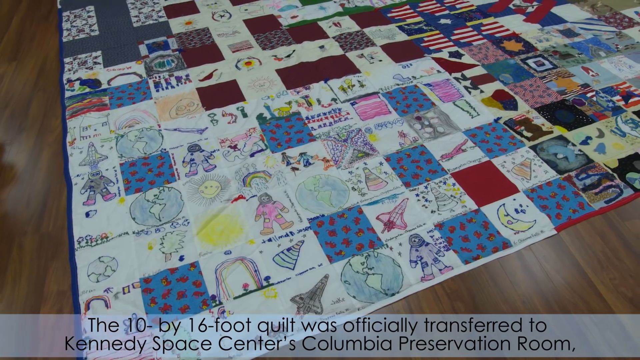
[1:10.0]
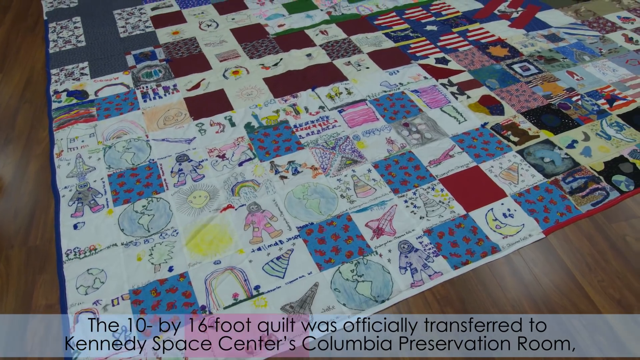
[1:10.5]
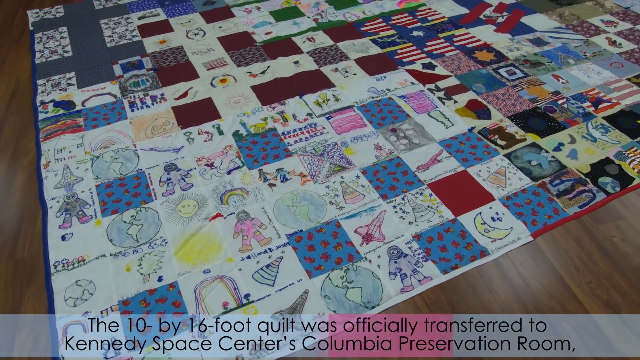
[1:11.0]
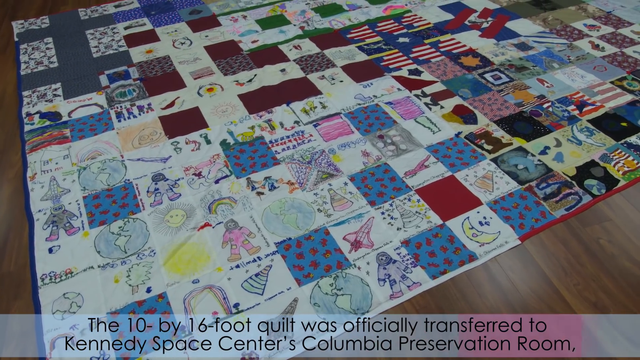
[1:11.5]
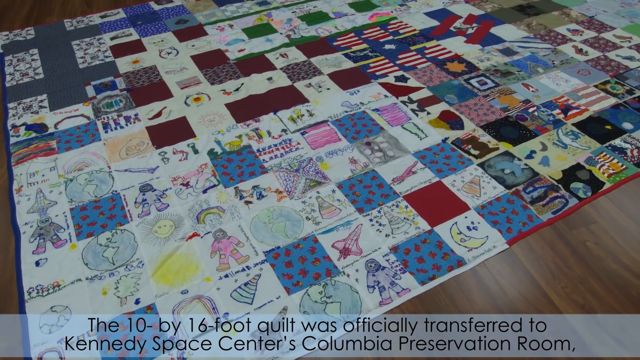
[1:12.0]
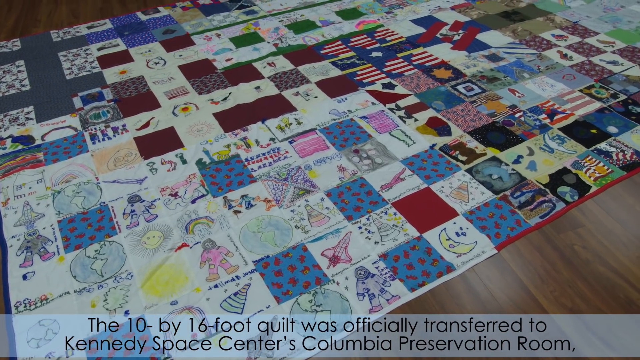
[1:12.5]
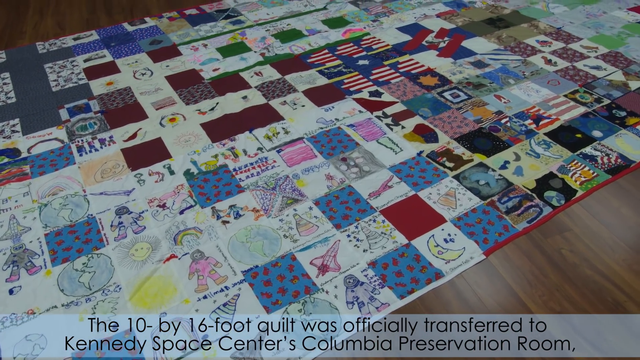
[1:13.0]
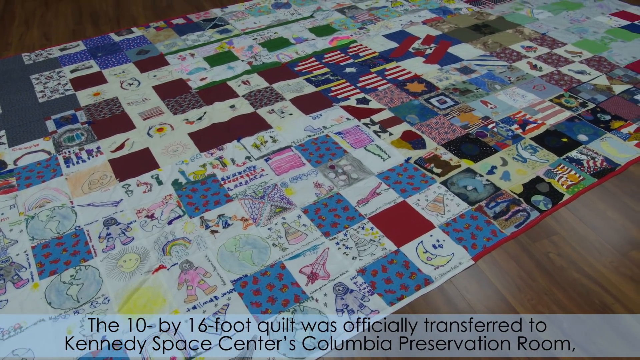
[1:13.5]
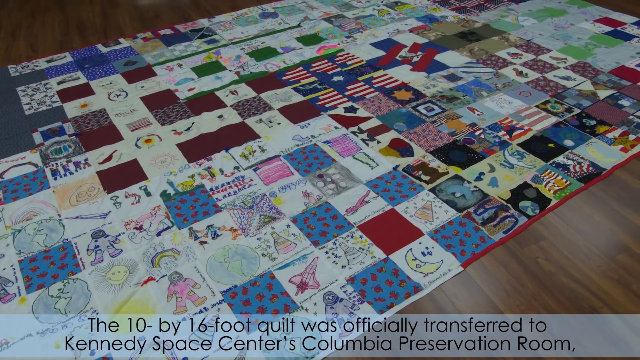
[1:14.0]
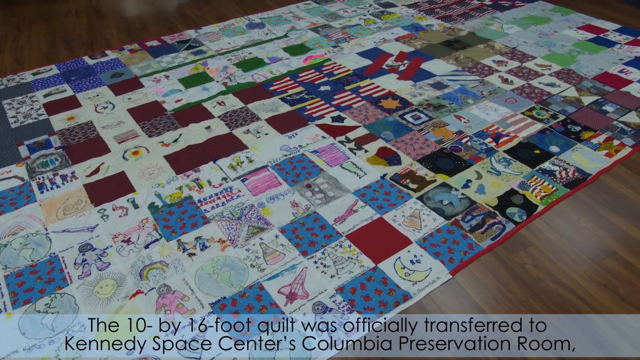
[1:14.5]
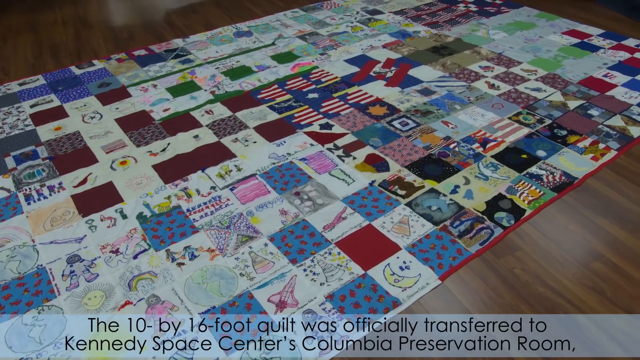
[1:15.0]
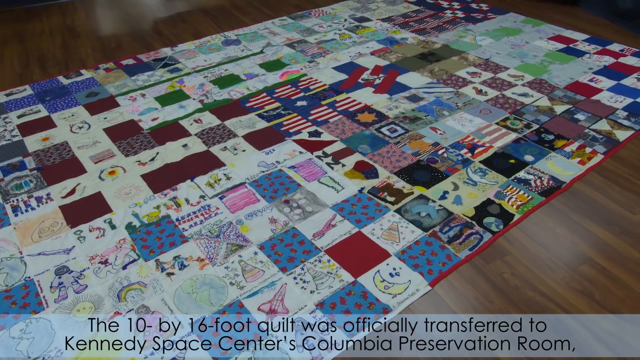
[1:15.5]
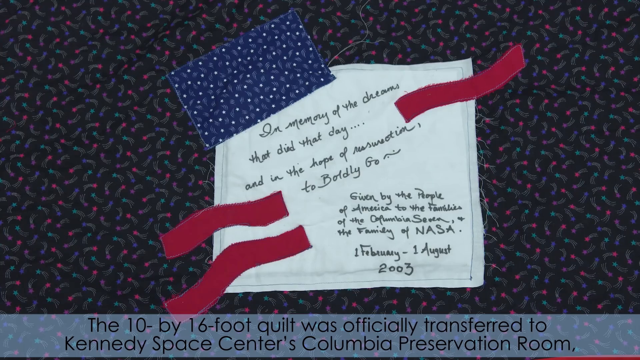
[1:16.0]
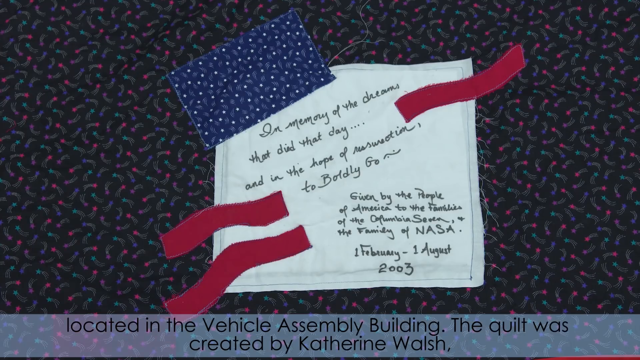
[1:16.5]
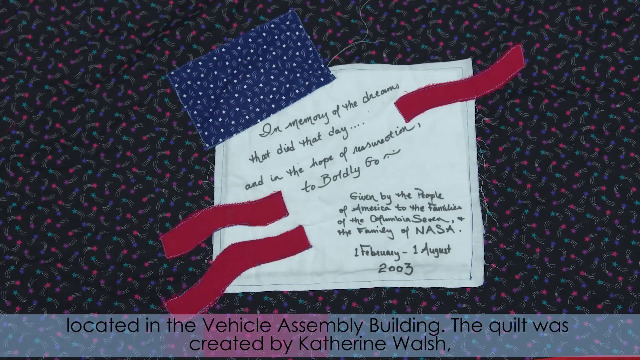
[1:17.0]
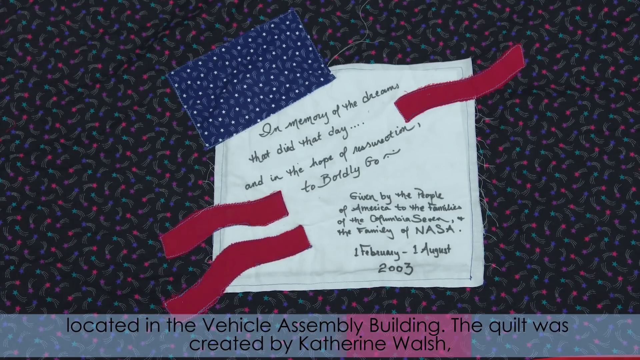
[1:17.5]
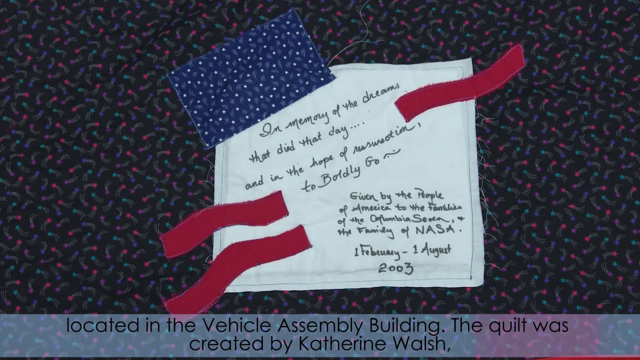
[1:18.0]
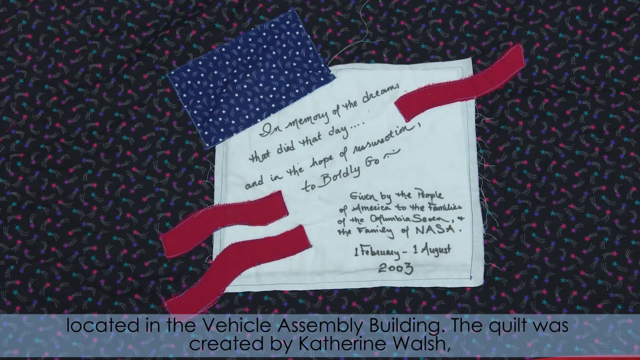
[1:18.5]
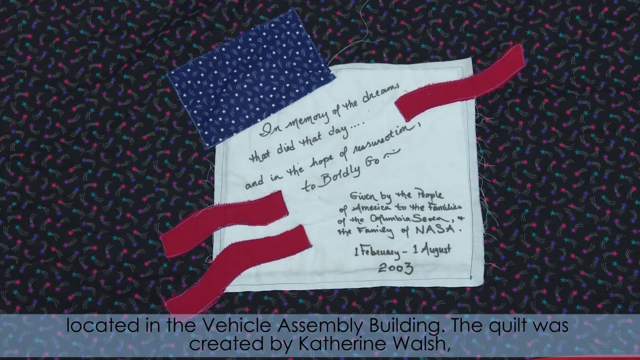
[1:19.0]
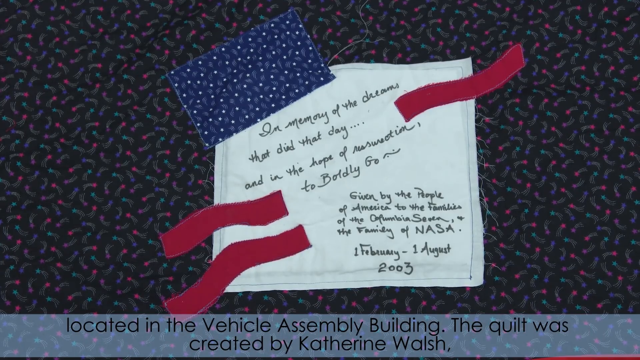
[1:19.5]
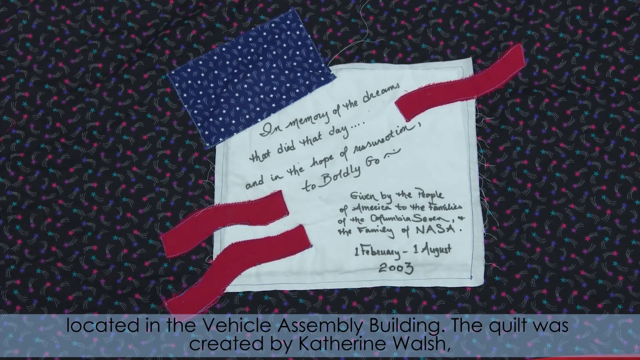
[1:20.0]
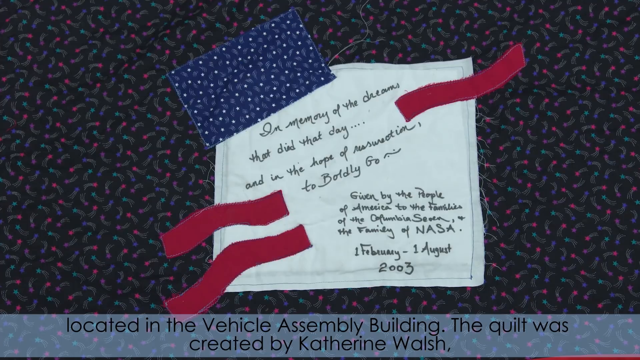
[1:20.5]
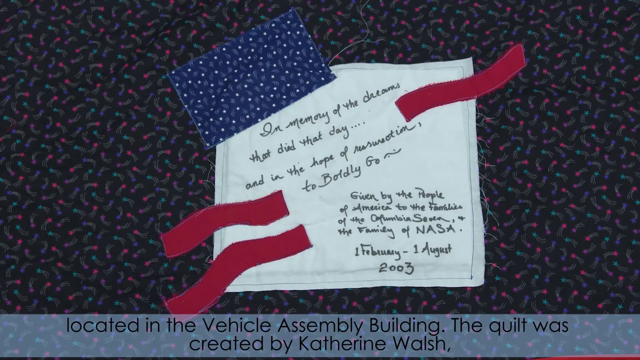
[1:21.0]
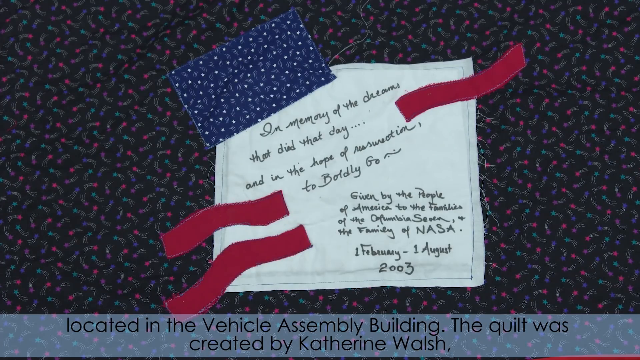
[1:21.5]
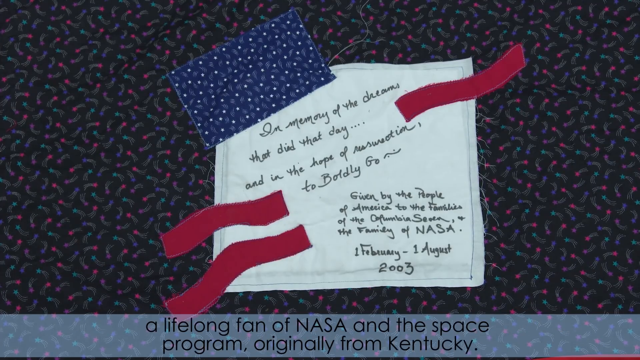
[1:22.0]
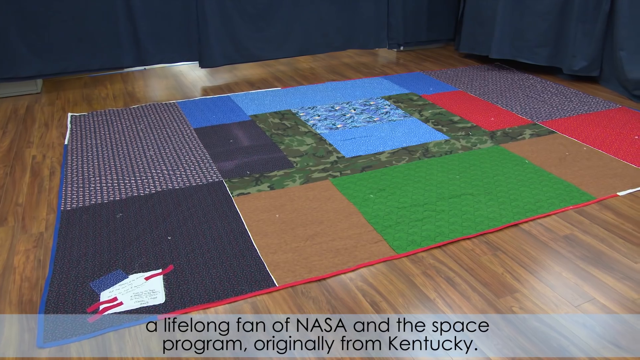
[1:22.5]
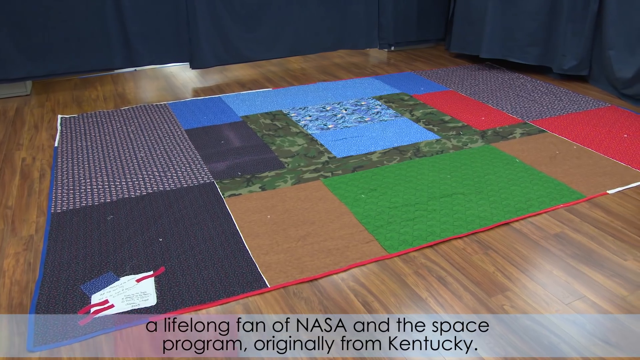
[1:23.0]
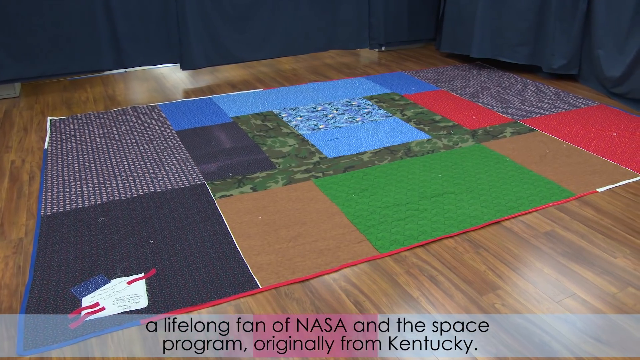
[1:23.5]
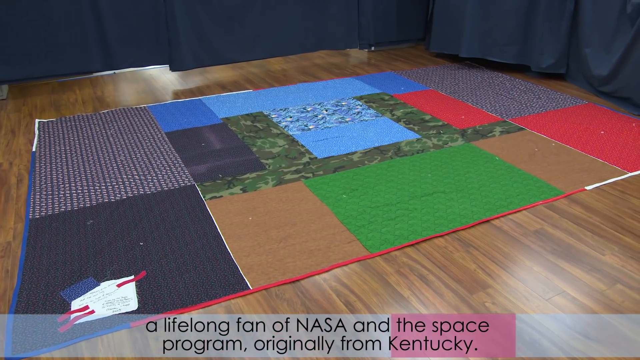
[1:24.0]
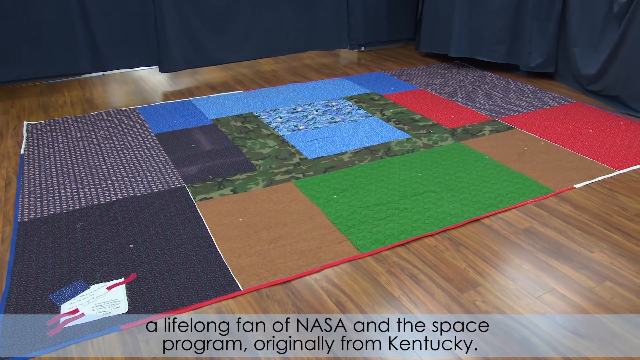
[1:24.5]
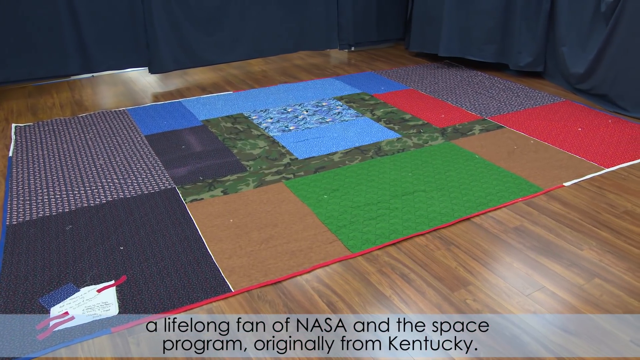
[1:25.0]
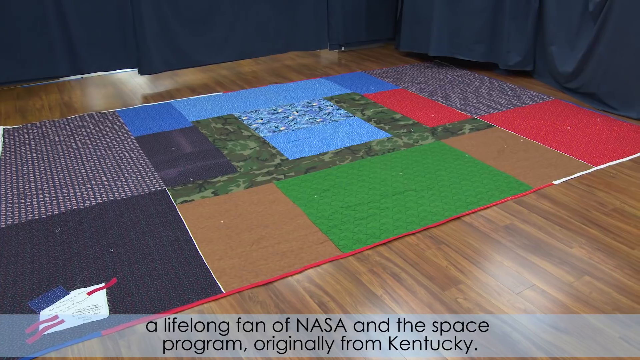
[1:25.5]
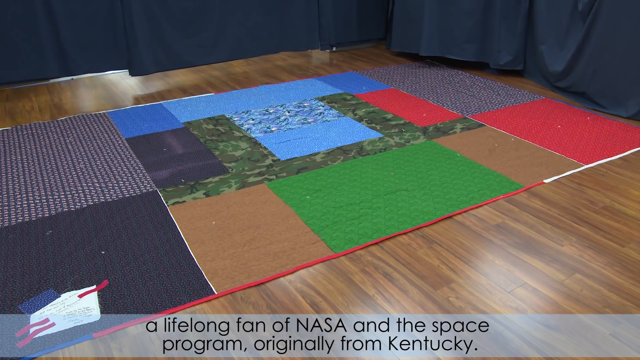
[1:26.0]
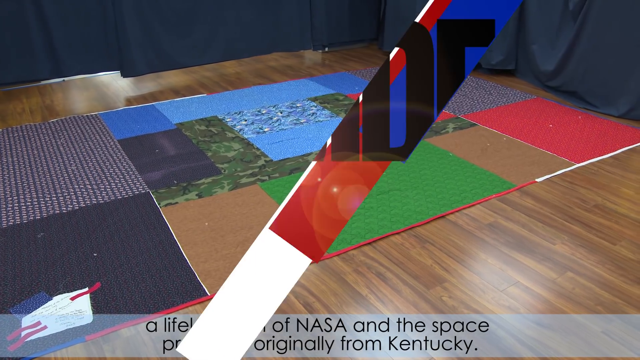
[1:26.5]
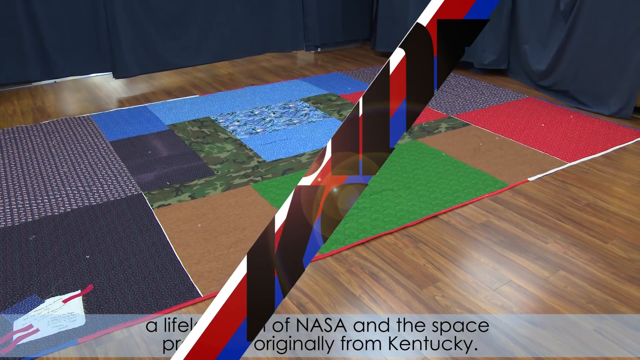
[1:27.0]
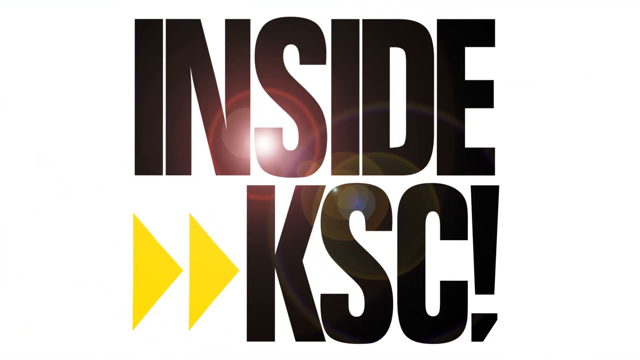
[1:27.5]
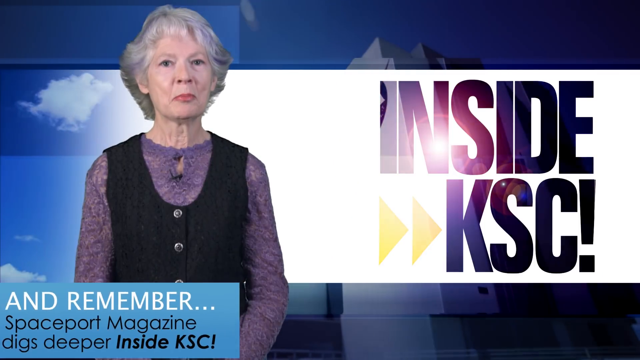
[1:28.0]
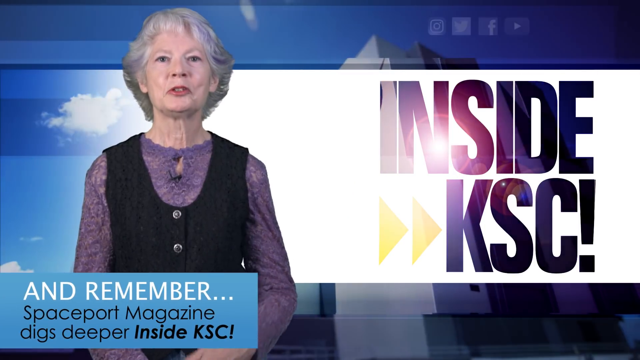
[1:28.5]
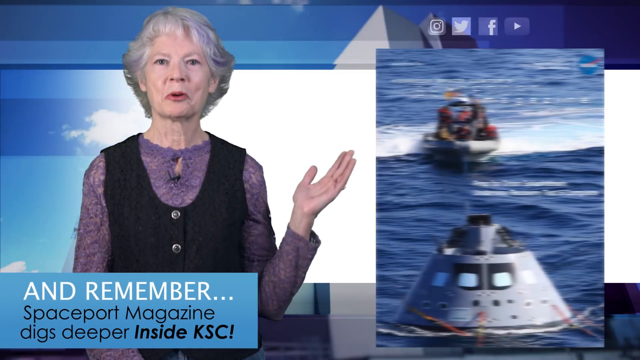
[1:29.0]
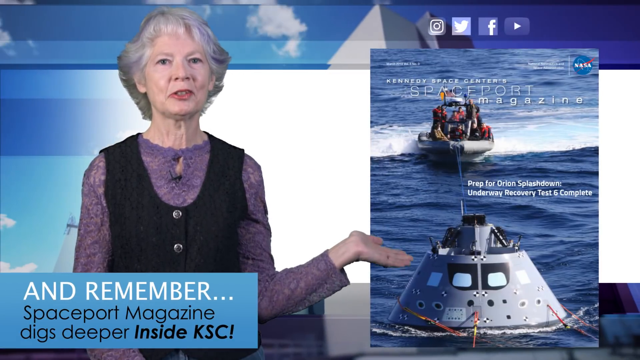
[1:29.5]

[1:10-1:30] A giant quilt is on what appears to be a wood floor, taking up most of the screen, as the camera pans from left to right to show the entire quilt. The video cuts to a close-up of what looks like a square piece of fabric with some text on it and other pieces of fabric attached, apparently one piece of the quilt. Next, another wood floor holds another giant quilt that doesn't seem to be finished, or perhaps has a different pattern, with much bigger squares in a variety of colors. The video then cuts to an older woman on the left with short gray hair, wearing a purple shirt with a dark blue vest, talking. To her right is an image, and the background behind her is blue, almost like a green screen background behind a newscast.